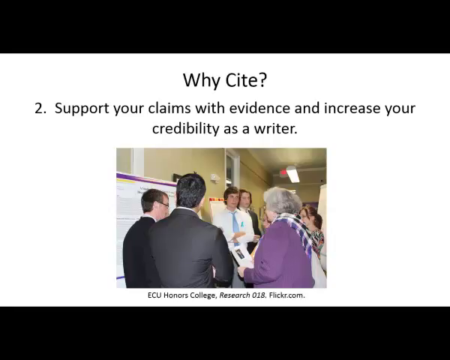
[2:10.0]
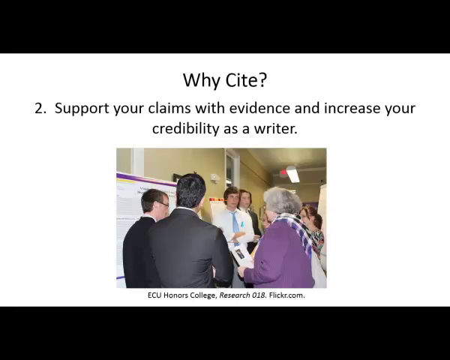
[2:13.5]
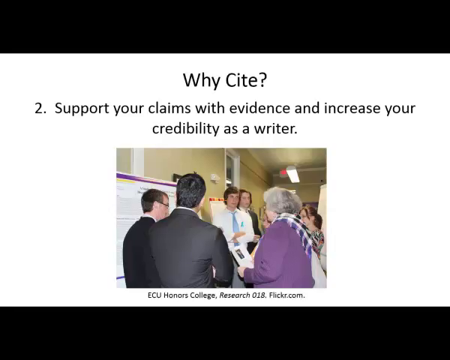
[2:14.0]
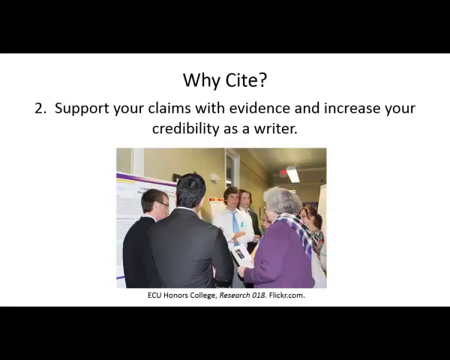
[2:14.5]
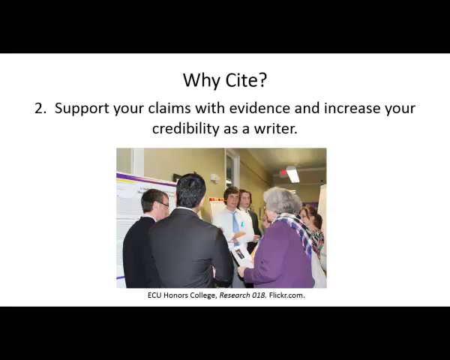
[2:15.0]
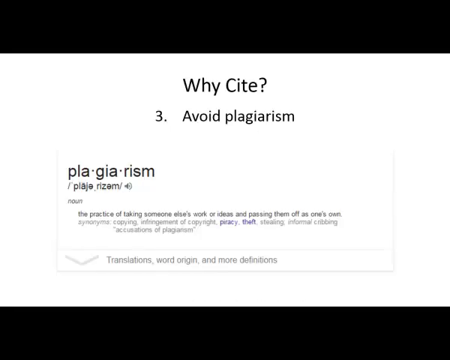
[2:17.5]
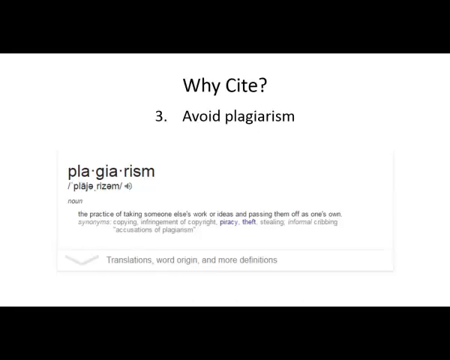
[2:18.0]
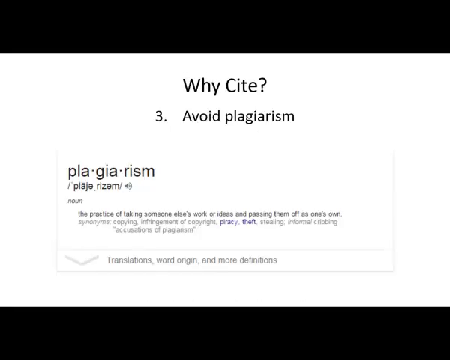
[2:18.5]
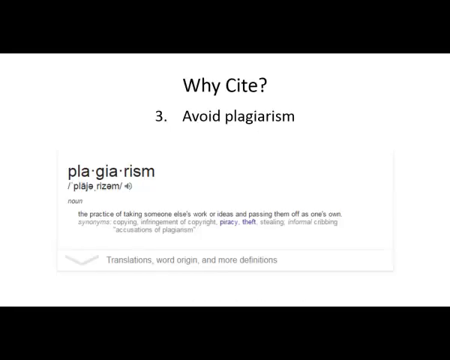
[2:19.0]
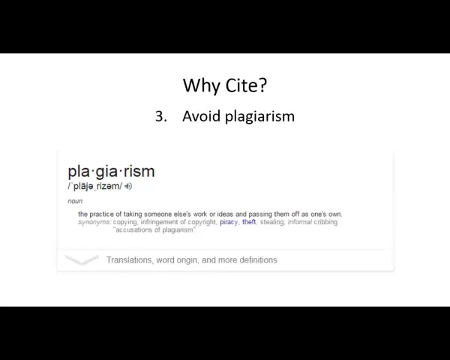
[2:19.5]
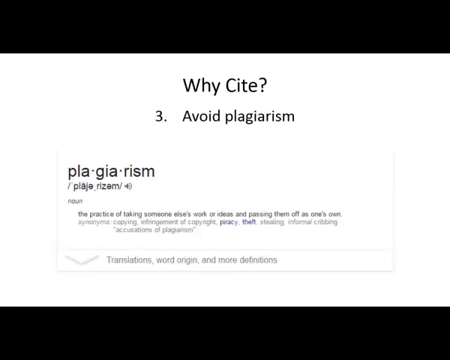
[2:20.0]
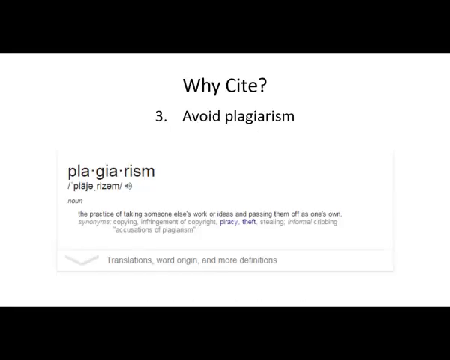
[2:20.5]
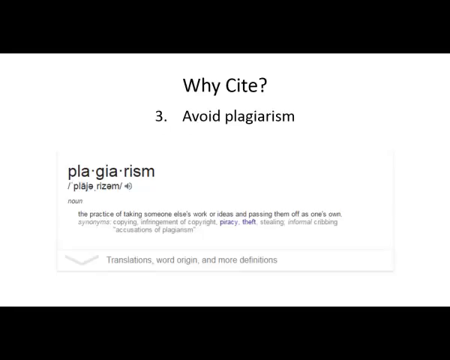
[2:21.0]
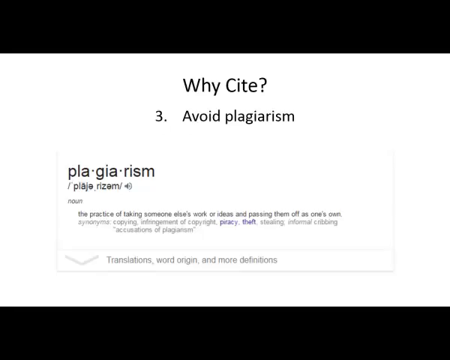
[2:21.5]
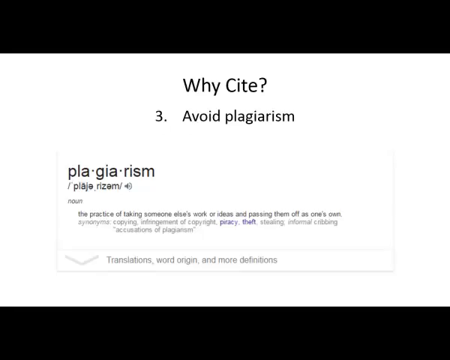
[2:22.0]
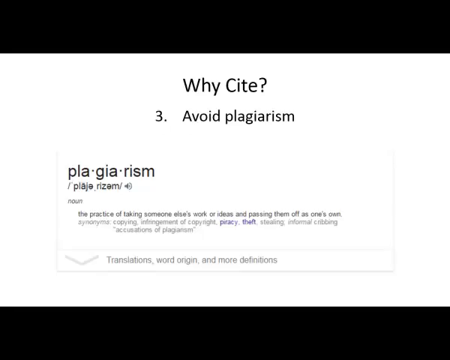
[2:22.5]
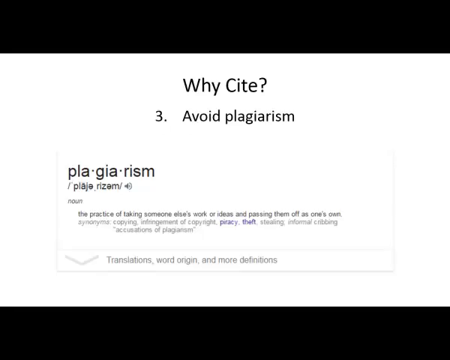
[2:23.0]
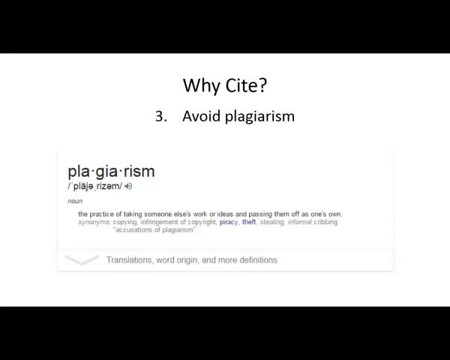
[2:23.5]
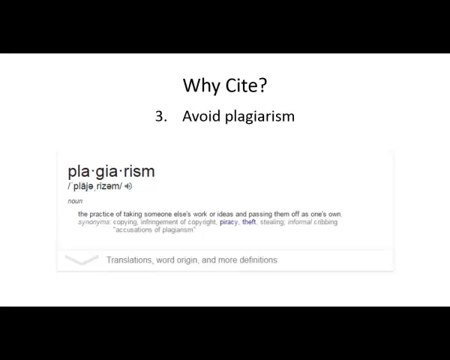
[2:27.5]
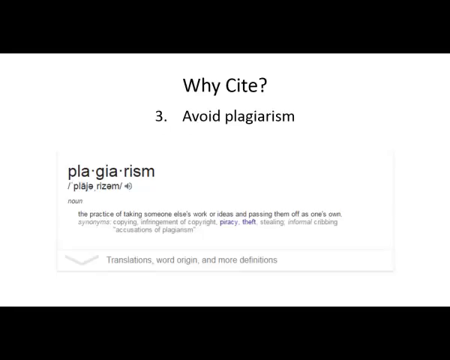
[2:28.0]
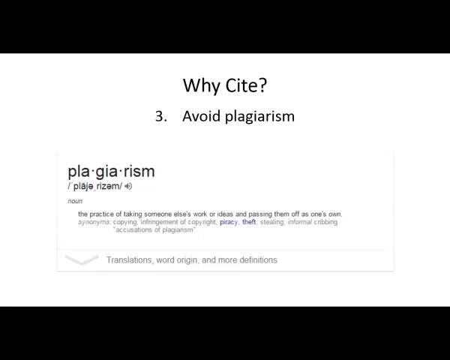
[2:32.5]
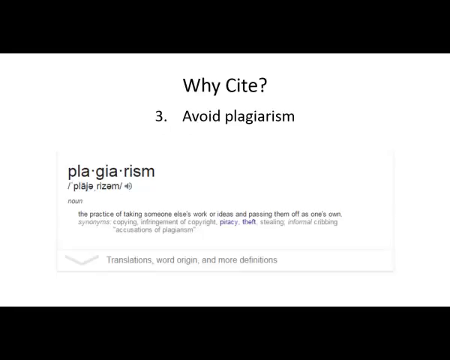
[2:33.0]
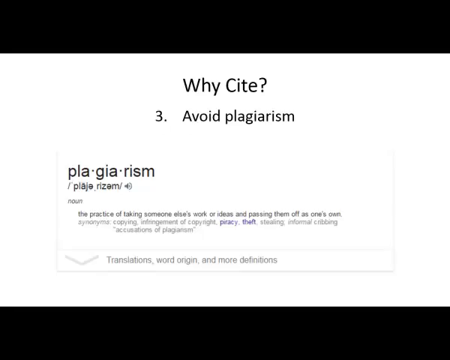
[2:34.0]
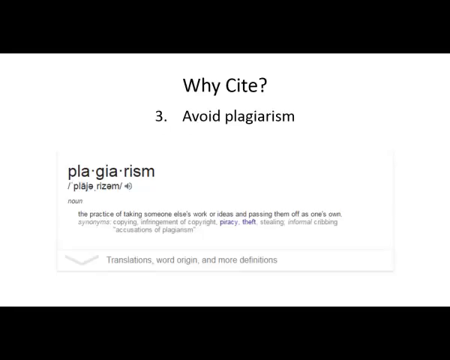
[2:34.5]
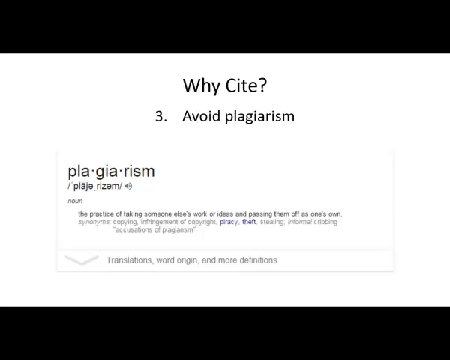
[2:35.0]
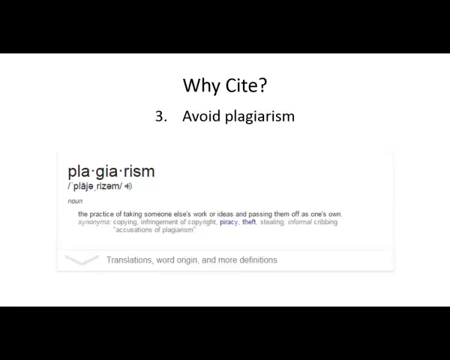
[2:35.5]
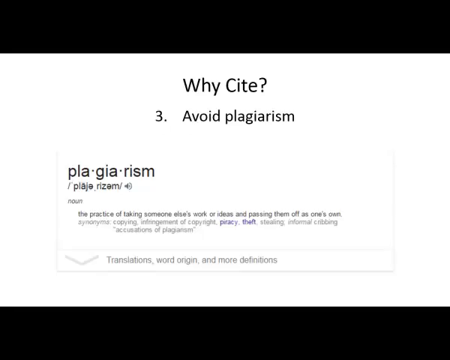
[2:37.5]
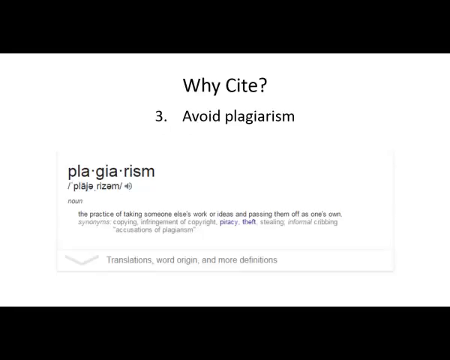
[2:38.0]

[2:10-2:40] The slide with "why cite" at the top, "support your claims with evidence and increase your credibility as a writer," and "ECU honors college research 18 flickr.com" at the bottom of the picture of people at a presentation continues. Then the third point appears, with "why cite" at the top again and "three, avoid plagiarism." It shows a screenshot of a definition of plagiarism, with the pronunciation, a little gray speaker icon beneath it, and then "noun" followed by the definition: "the practice of taking someone else's work or ideas and passing them off as one's own." Synonyms follow: "copying, infringement of copyright, piracy, theft, stealing, informal cribbing," along with "accusations of plagiarism." Beneath that is an arrow with the text "translations, word origin and more definitions." This slide remains until the end of the shot.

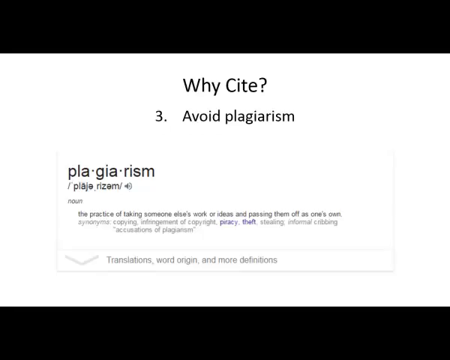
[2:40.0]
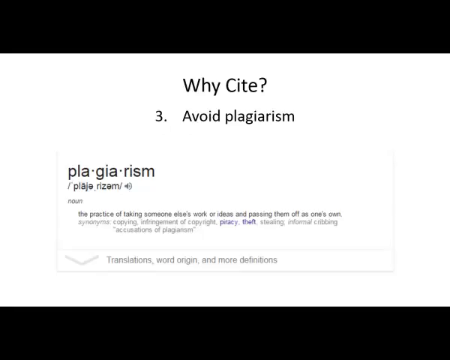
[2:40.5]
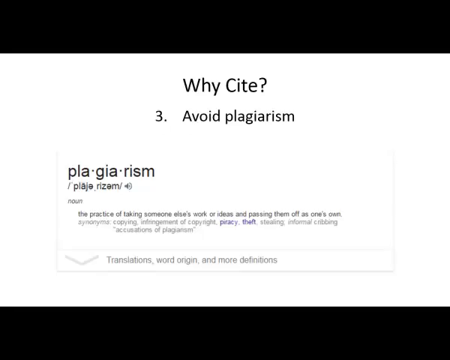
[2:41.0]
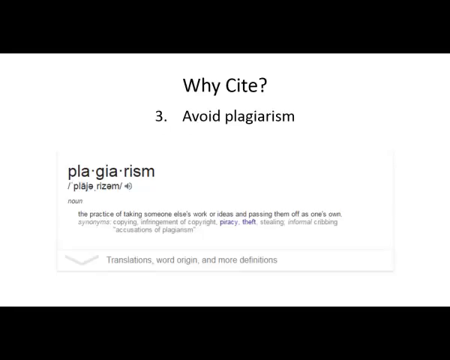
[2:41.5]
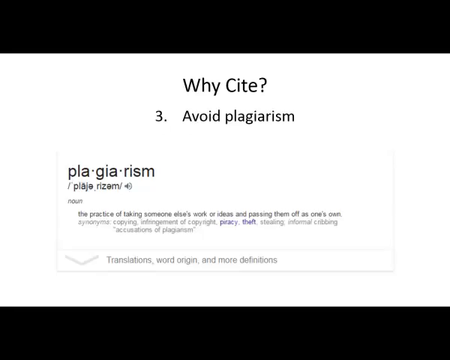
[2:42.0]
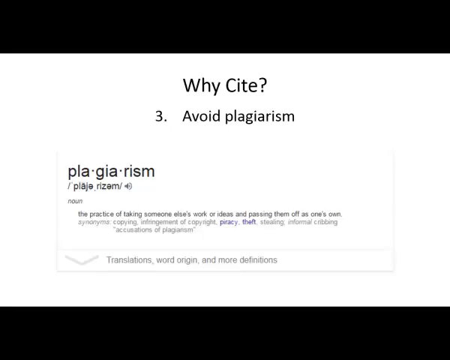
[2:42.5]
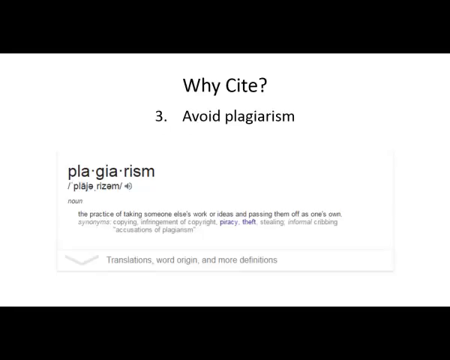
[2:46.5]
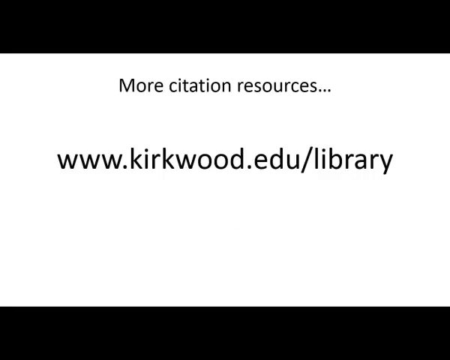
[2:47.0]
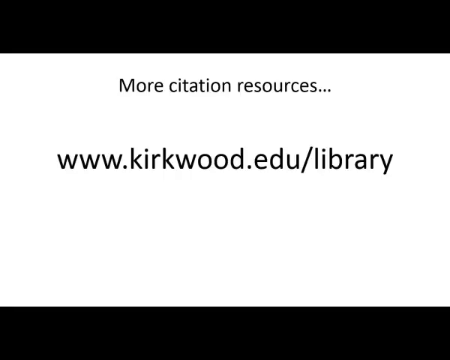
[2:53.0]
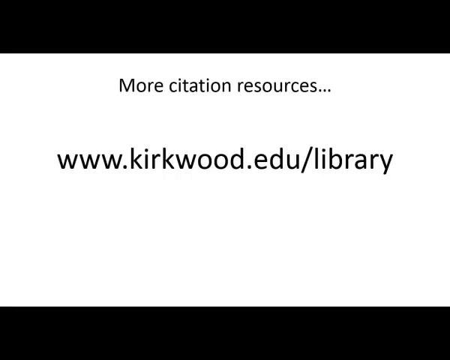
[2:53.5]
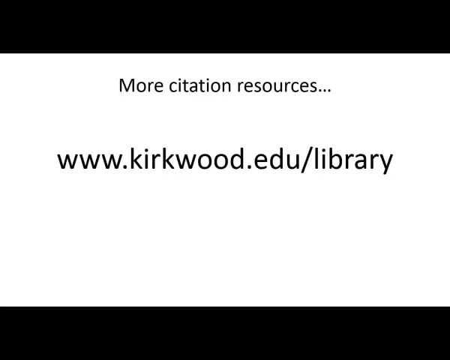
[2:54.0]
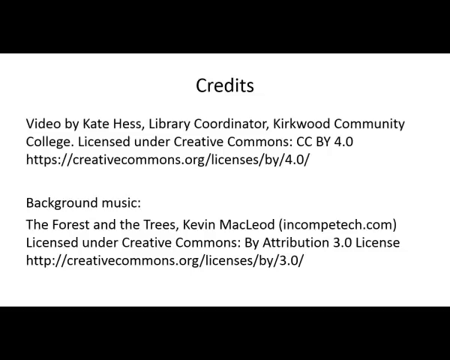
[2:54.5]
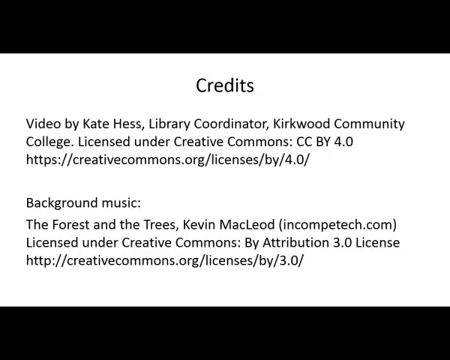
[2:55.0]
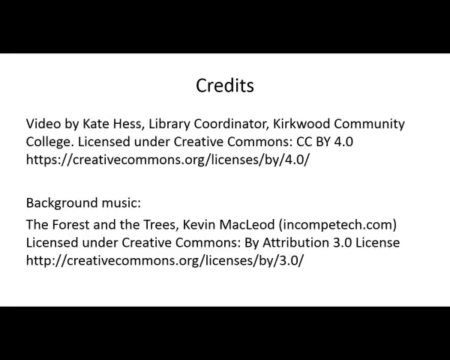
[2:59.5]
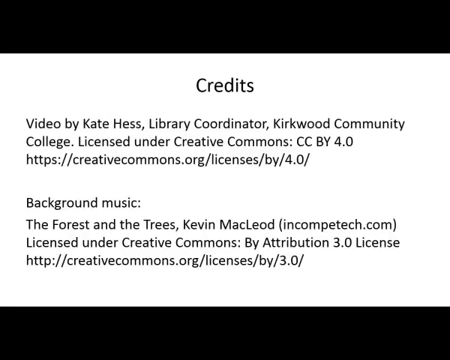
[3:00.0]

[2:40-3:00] The slide reading "why cite?" with "three, avoid plagiarism" continues, showing the little screenshot of the definition of plagiarism, as if taken from a website and placed on the presentation, with the definition "the practice of taking someone else's work or ideas and passing them off as one's own." Next, a slide reads "more citation resources..." with the link "www.kirkwood.edu/library." The final slide is titled "credits." The first credit reads "video by Kate Hess, library coordinator, Kirkwood Community College, licensed under Creative Commons, CC BY 4.0, https://creativecommons.org/licenses/BY/4.0/." The second credit is for background music and reads "the forest and the trees, Kevin MacLeod (compotech.com), licensed under Creative Commons: by attribution 3.0 license, http://creativecommons.org/licenses/BY/3.0/."